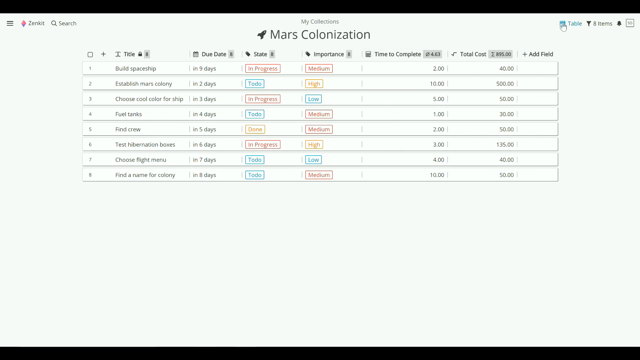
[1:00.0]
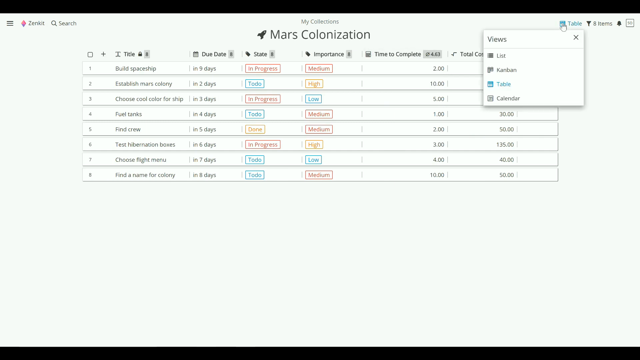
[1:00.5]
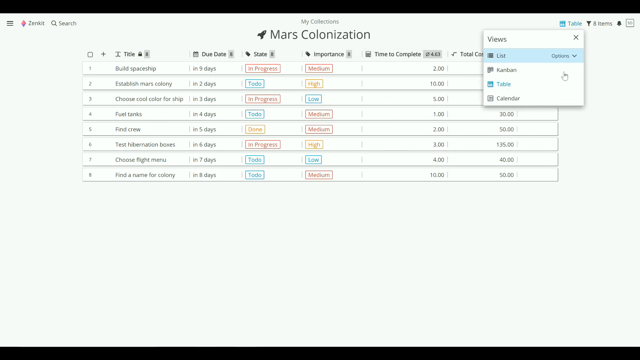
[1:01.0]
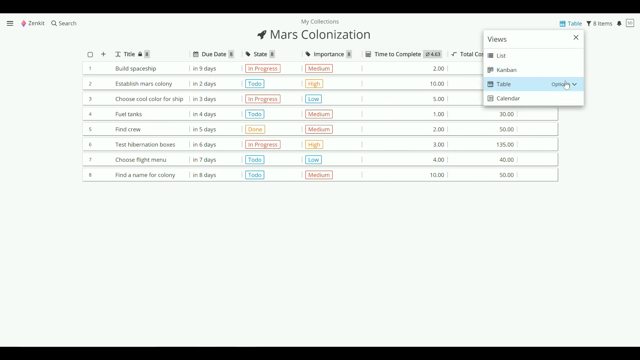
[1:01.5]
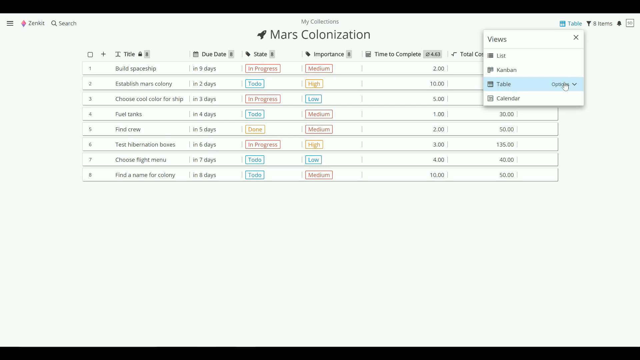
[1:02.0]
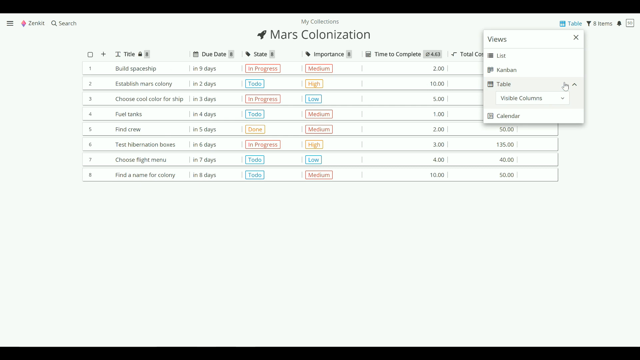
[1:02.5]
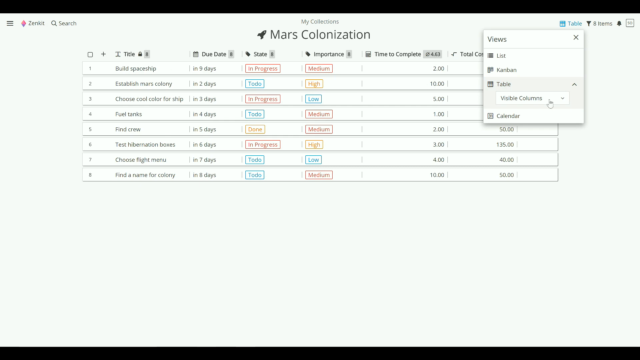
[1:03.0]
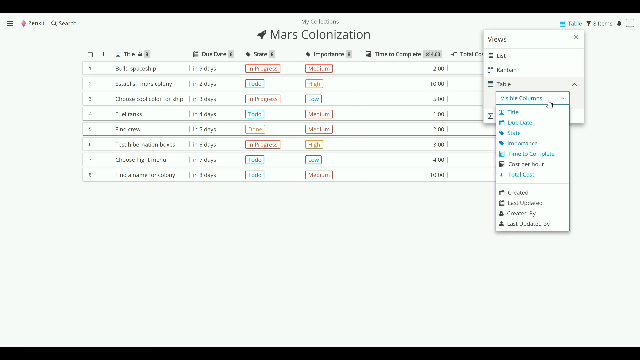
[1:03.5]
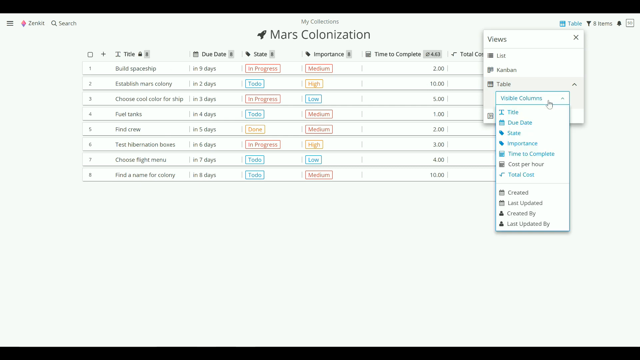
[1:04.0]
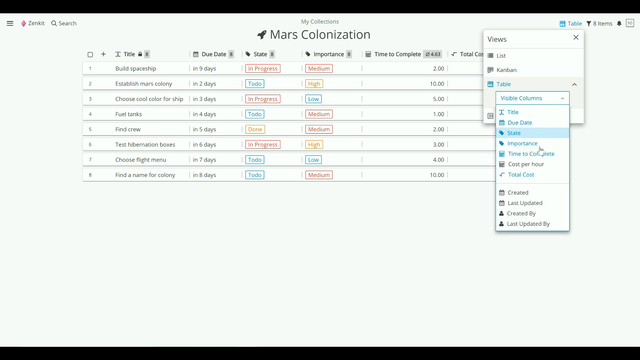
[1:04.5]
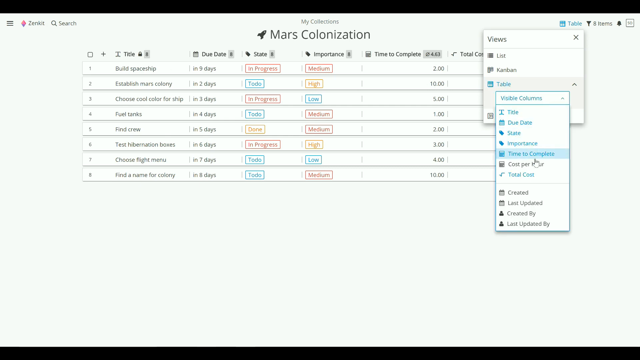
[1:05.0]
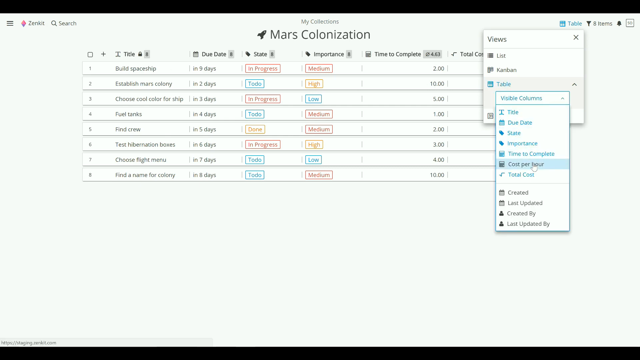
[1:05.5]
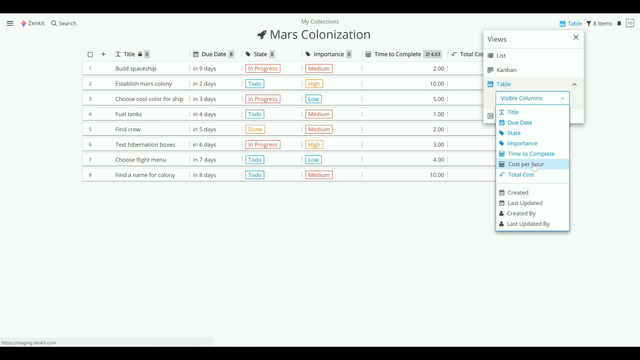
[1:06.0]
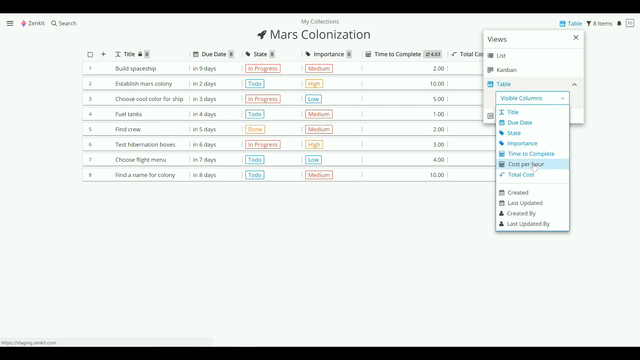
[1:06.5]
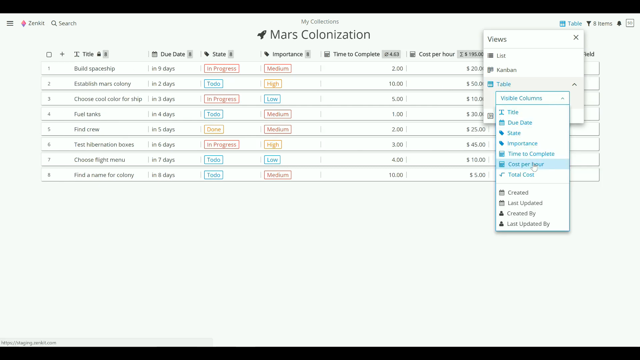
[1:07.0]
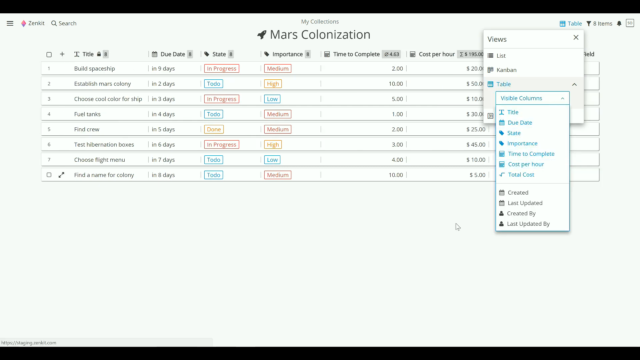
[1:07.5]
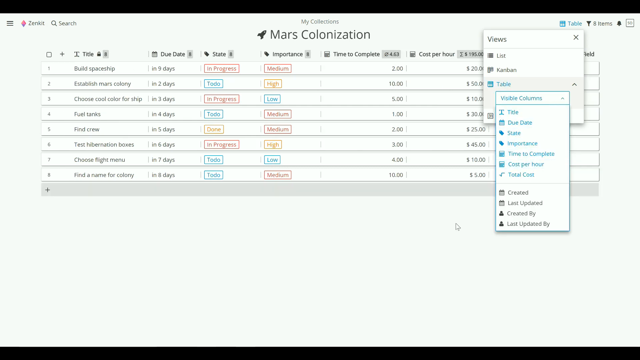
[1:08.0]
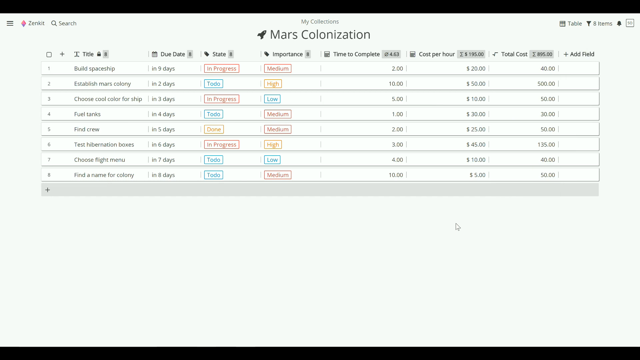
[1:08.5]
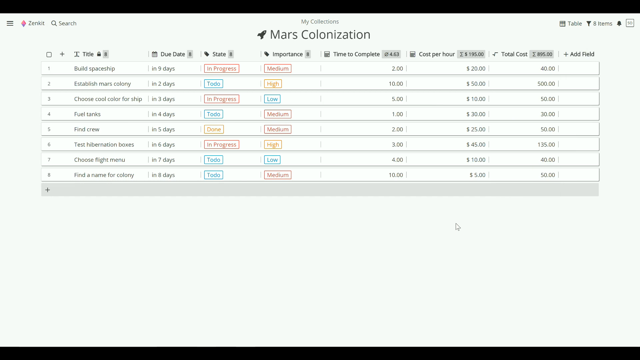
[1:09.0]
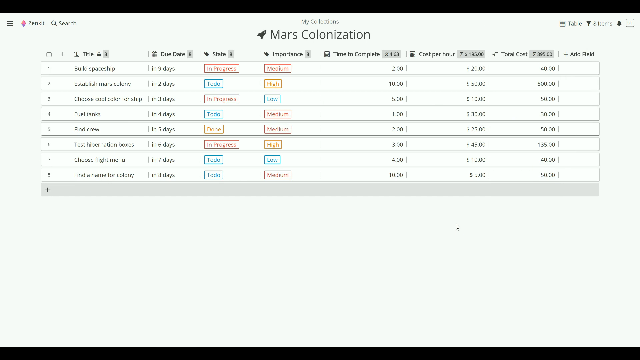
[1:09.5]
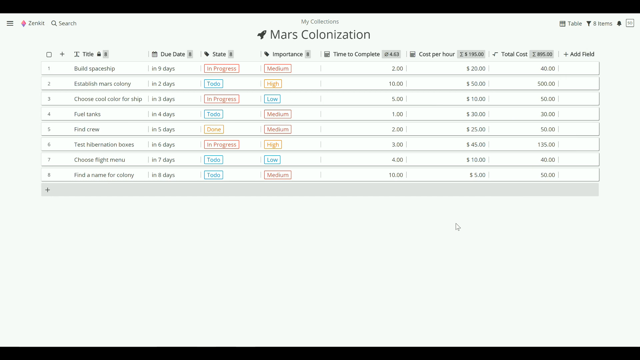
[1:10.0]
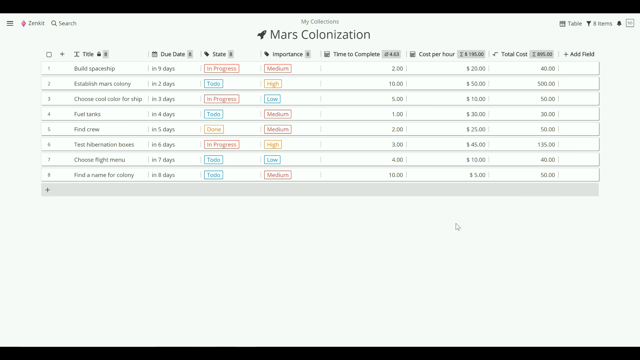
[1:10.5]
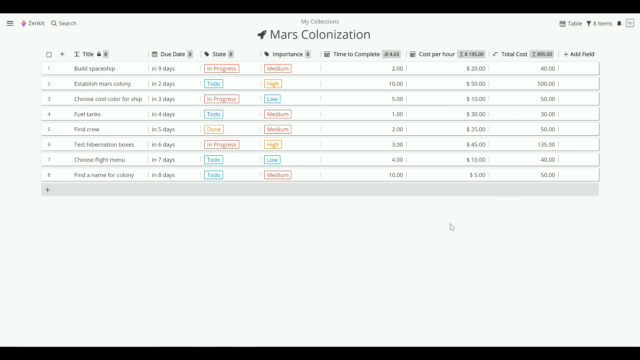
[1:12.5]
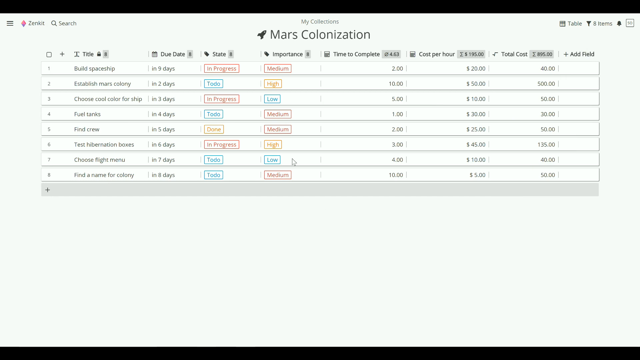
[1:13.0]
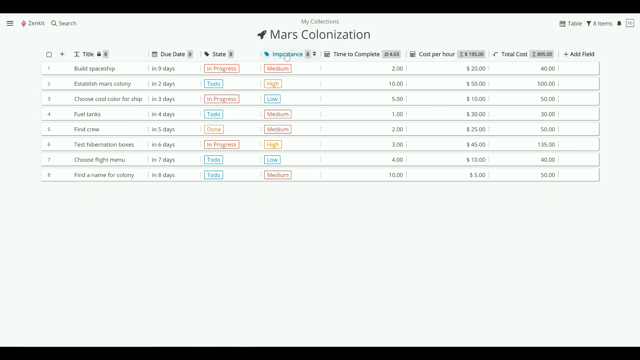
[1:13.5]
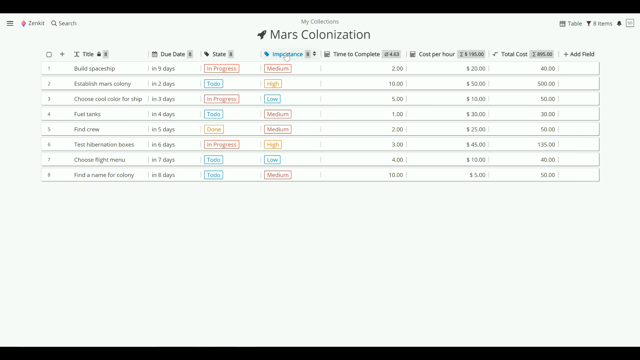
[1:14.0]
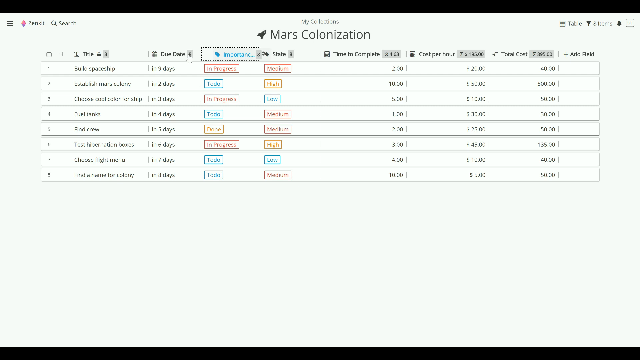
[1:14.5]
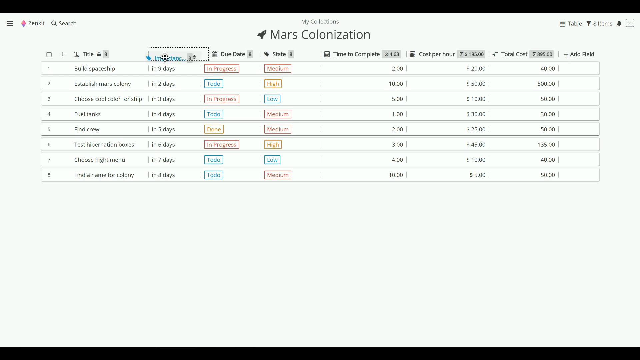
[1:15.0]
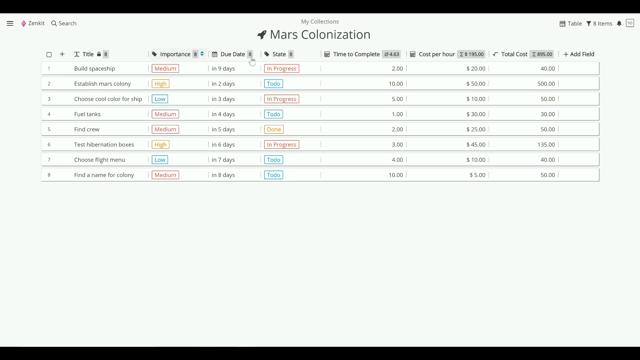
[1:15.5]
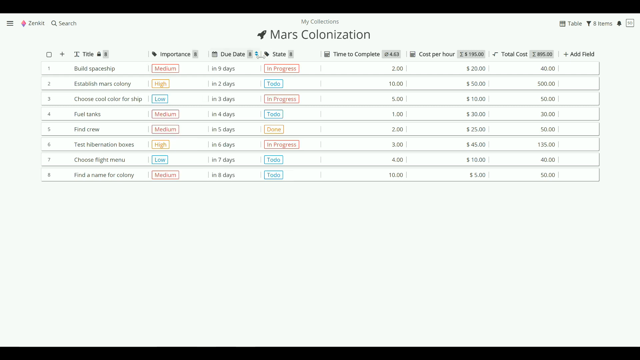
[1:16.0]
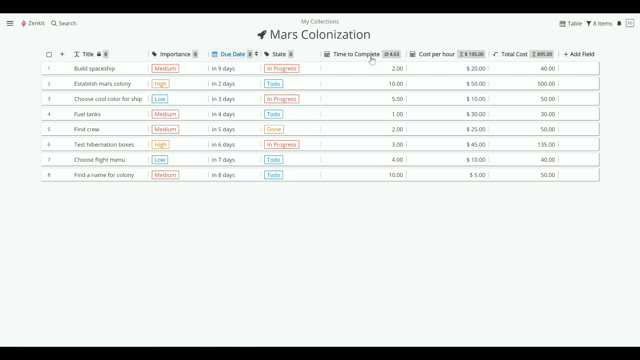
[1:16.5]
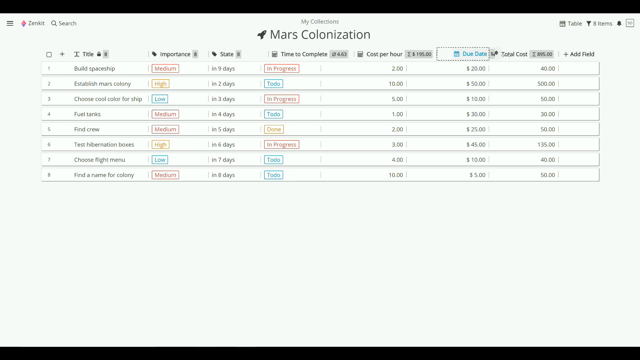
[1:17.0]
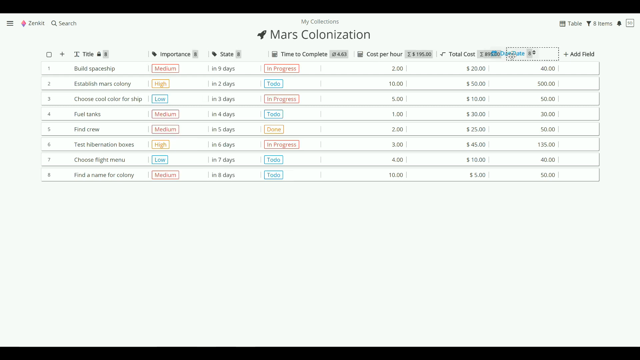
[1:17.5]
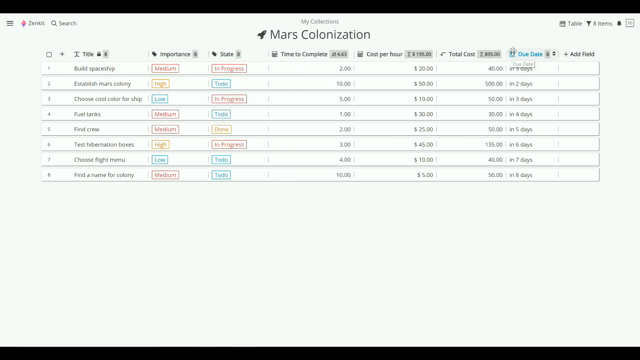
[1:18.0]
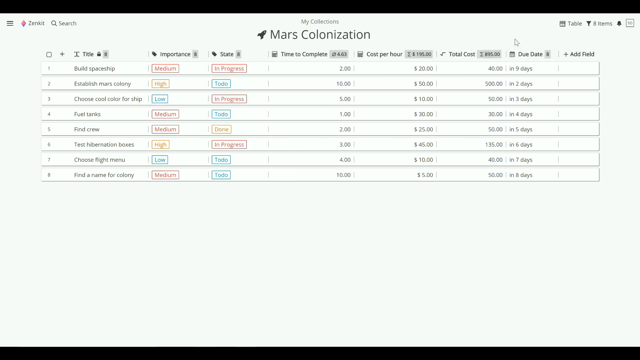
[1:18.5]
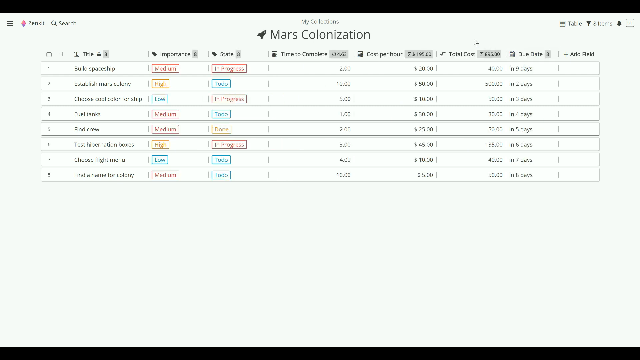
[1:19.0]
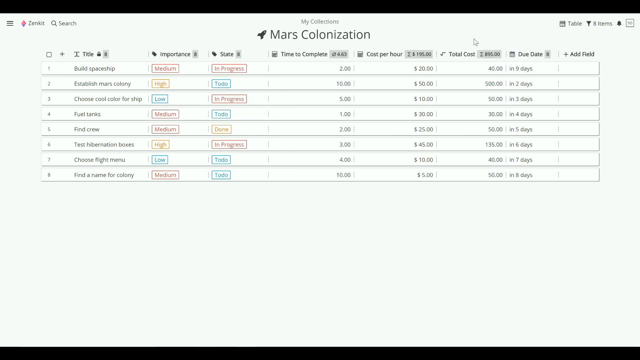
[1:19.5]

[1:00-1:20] In the upper right corner of the app are some options: "table" with a table icon next to it, a filter icon with "eight items", and a bell notification icon. The mouse moves over the table link, which turns blue, and clicks it, opening a menu labeled "Views" with four options: list, Kanban, table and calendar. Table is highlighted in blue as the current view. The user clicks the drop-down of options for that view, which shows "visible columns" with the ability to choose which columns are visible. The user goes down to the cost per hour column that was just hidden and clicks it, bringing that column back into view.